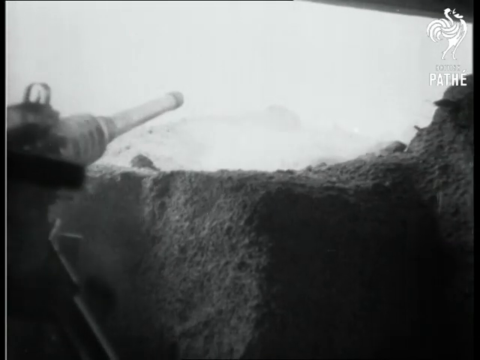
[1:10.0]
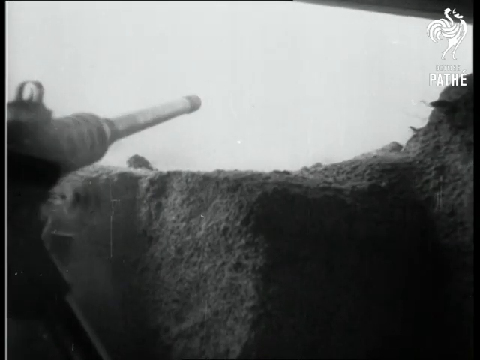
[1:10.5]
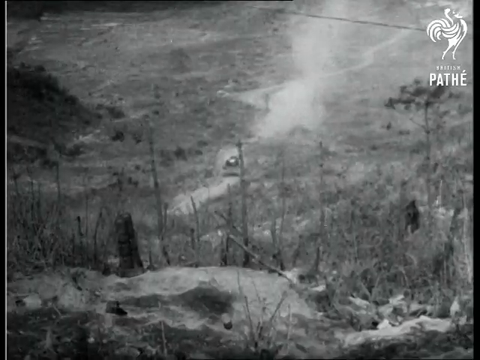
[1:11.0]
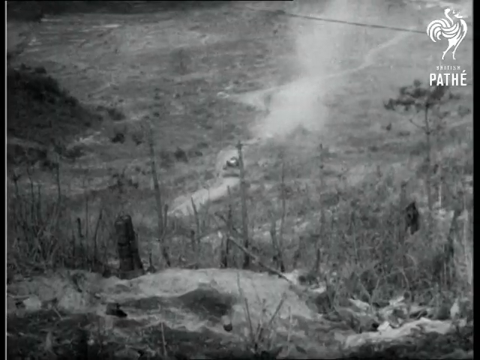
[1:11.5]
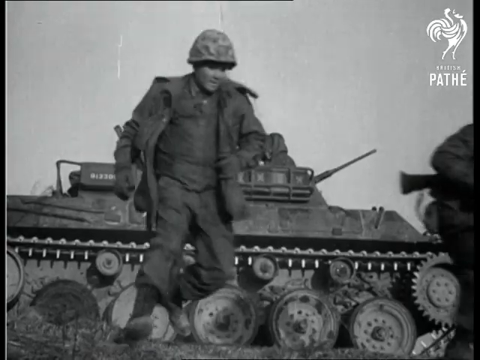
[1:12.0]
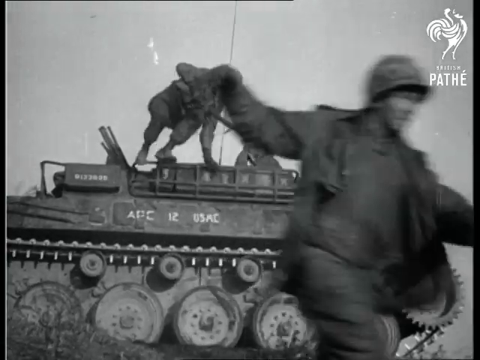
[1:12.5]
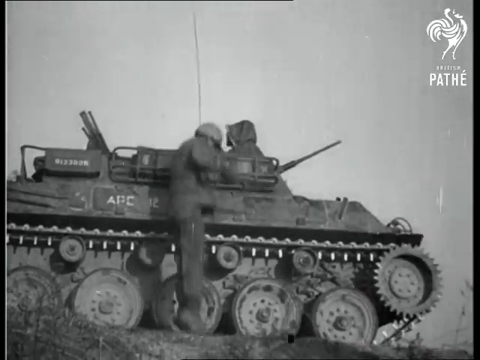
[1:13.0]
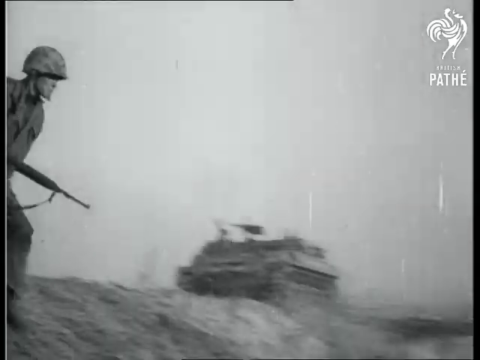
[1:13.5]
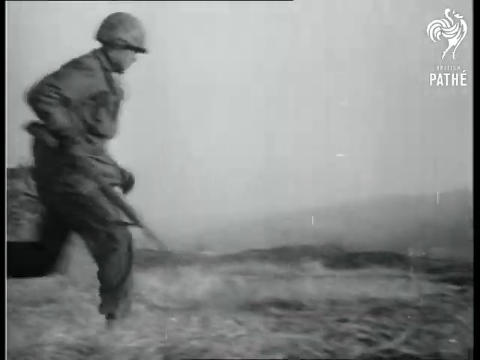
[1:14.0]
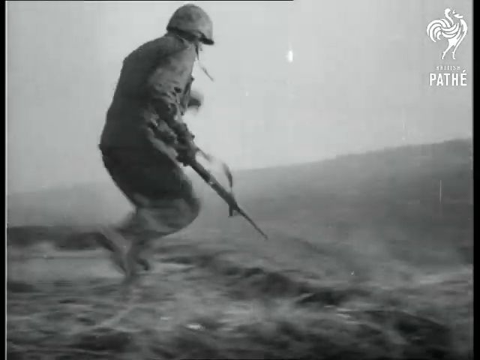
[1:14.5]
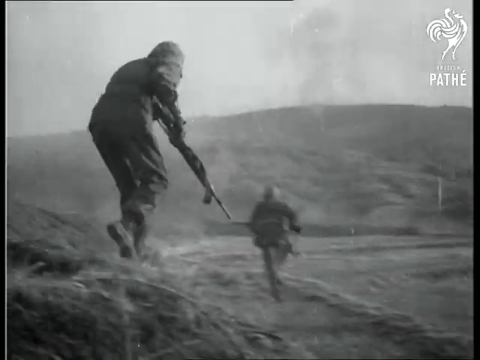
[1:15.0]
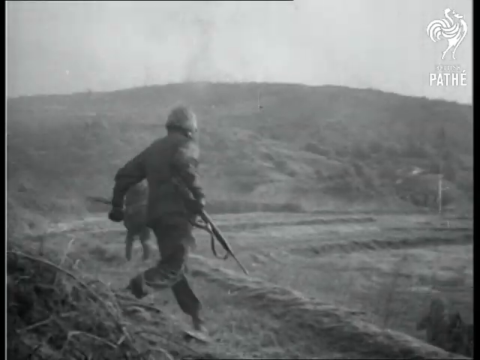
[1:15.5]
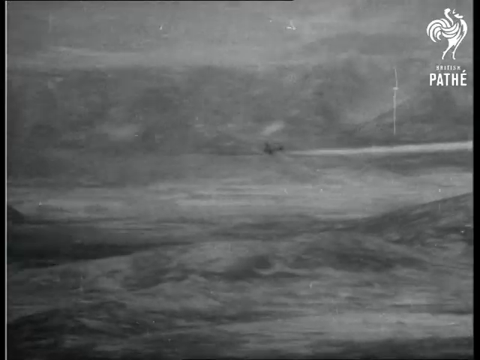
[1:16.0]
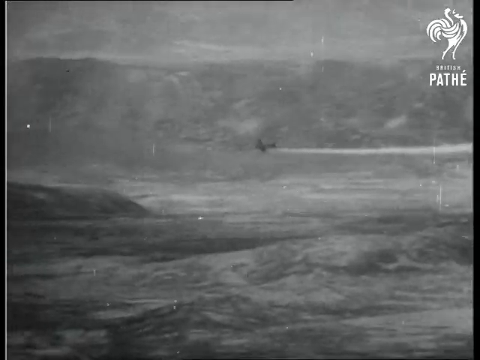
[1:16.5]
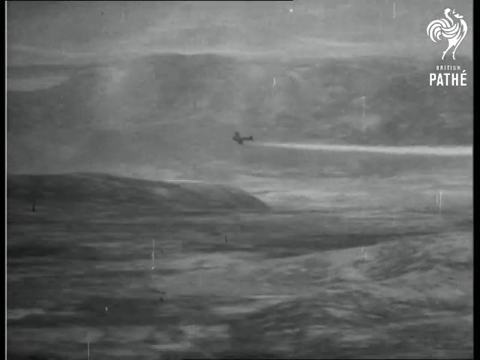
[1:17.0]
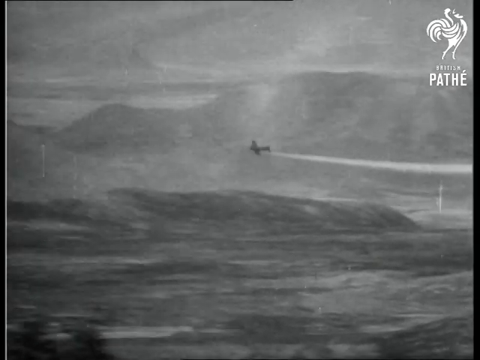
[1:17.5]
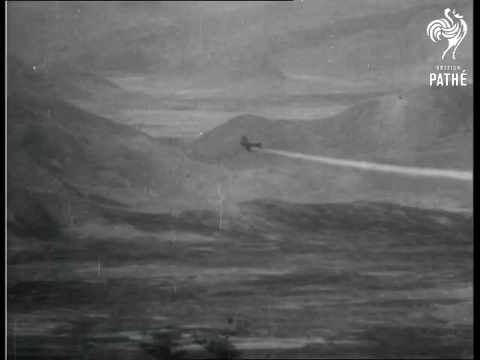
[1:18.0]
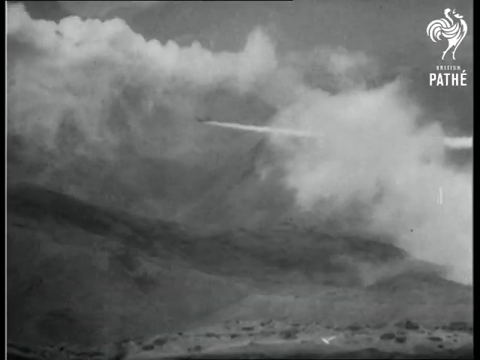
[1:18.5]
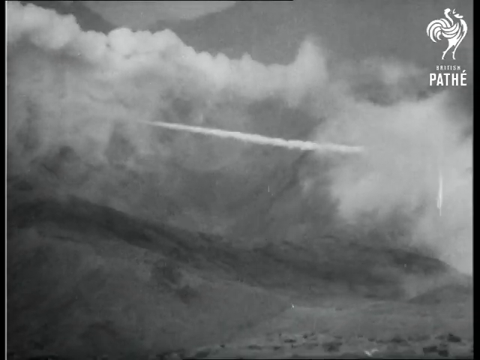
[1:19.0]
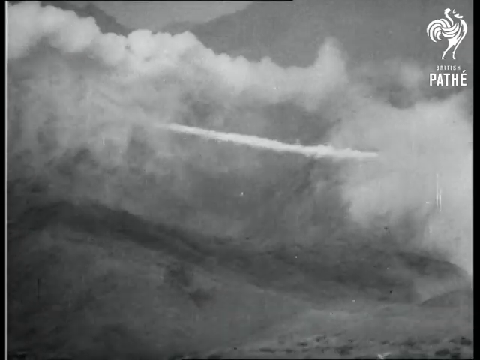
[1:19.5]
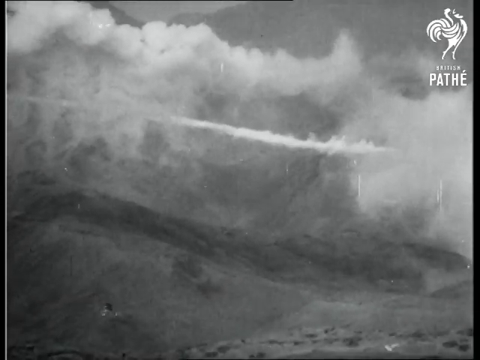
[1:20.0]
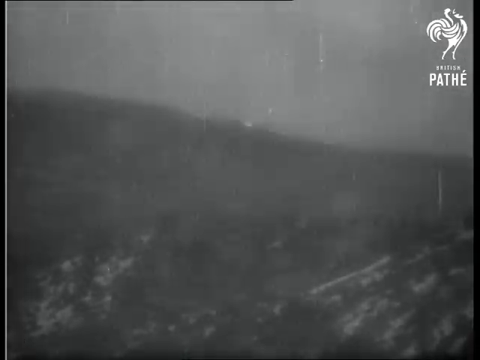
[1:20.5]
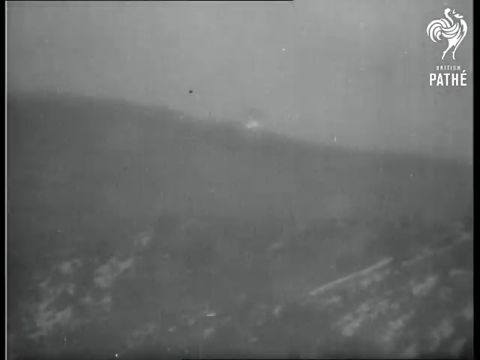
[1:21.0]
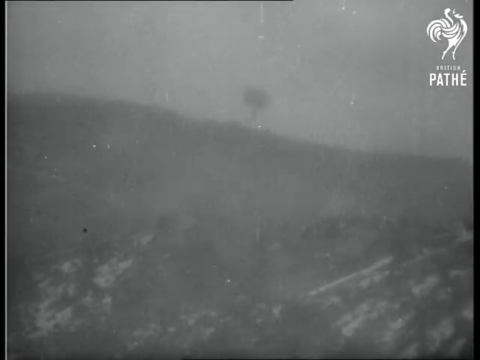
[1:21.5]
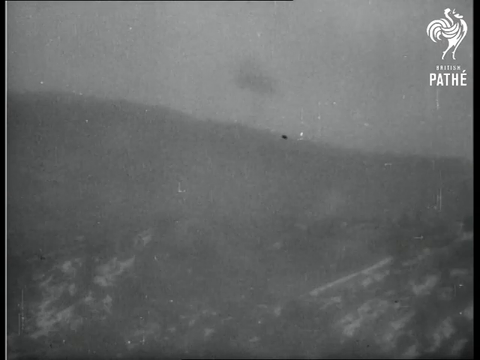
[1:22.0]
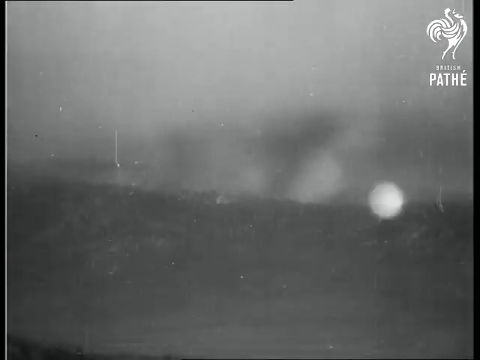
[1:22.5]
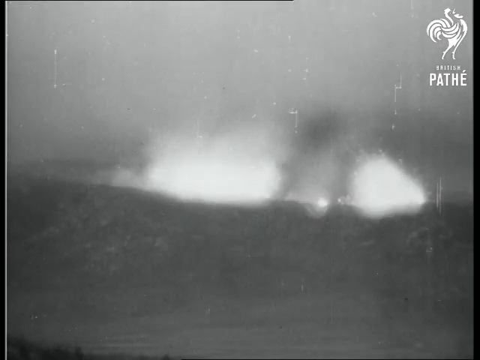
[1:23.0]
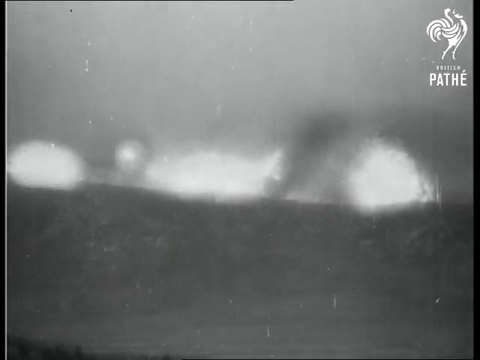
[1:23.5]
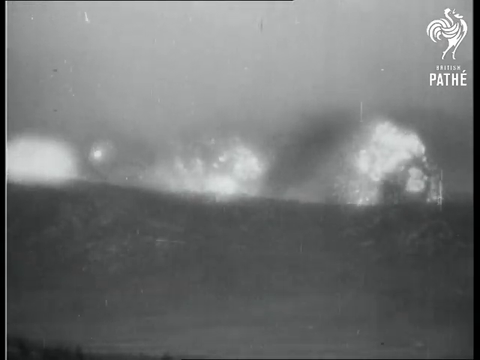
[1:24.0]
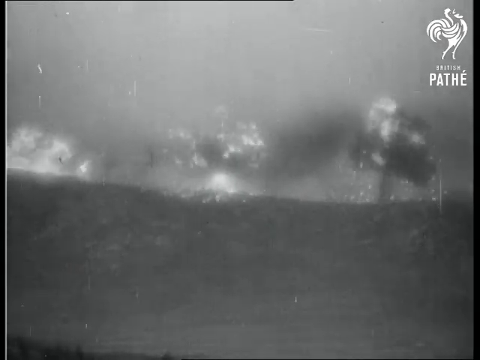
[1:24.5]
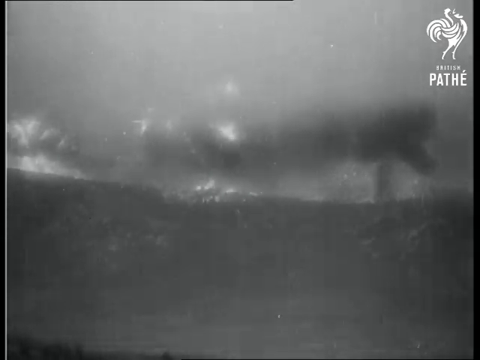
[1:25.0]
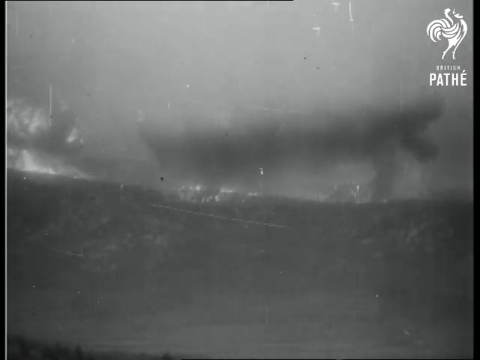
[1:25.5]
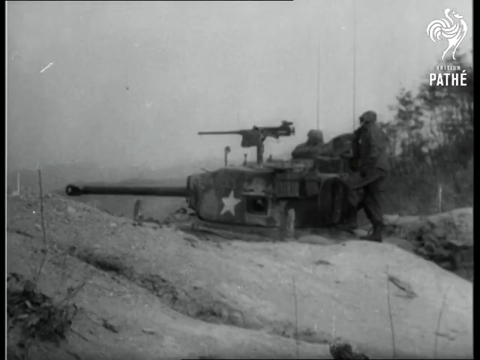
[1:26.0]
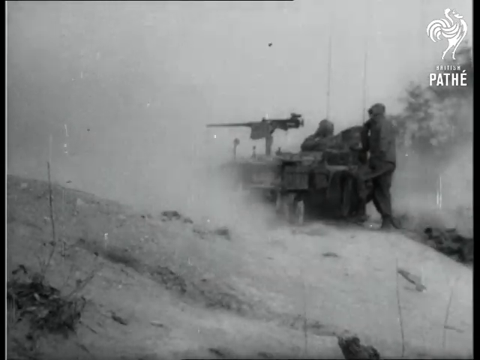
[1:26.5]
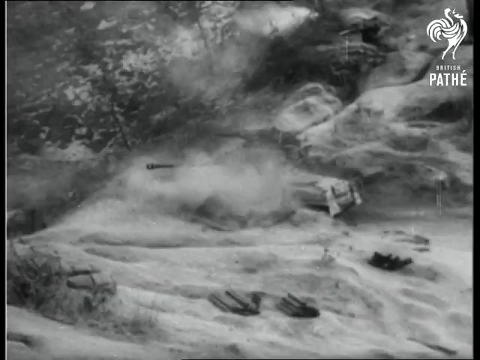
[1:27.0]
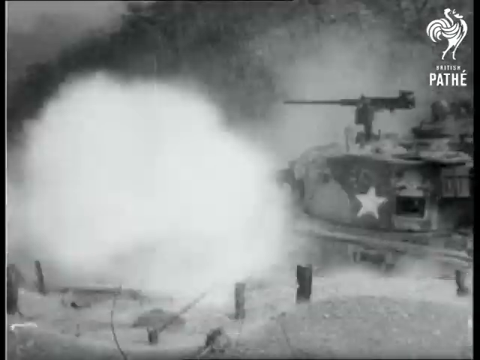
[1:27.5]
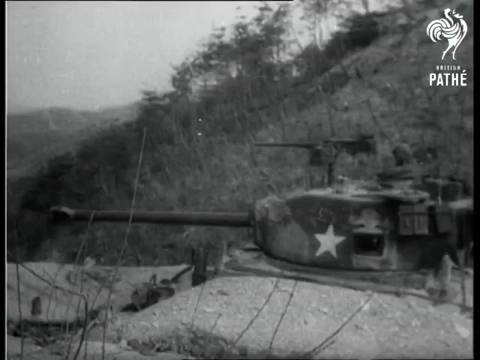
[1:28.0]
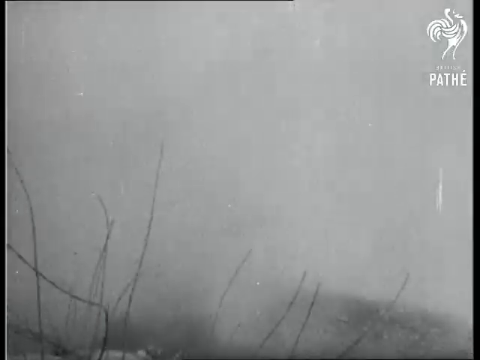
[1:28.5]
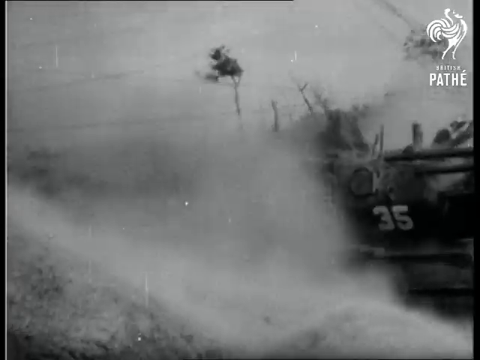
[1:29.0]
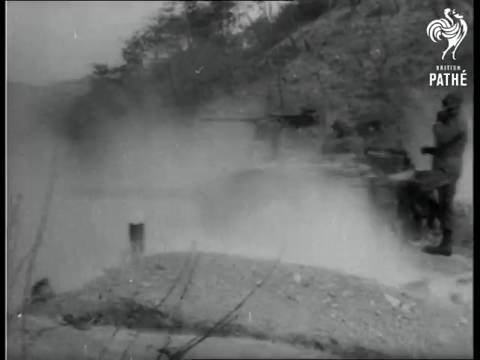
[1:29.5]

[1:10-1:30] A man fires a machine gun, and the scene cuts to a distant shot of what looks like a truck moving down a dirt road at the front lines. A closer shot reveals it is a U.S. Marine Corps tank, with several Marines jumping from its turret. The Marines, wearing helmets and full combat fatigues, run across the ground holding their automatic weapons in their right hands. The shot changes to a disabled plane moving right to left across a stormy sky, with white smoke pouring from an engine on the right. After several shots of the plane comes the point of the crash: a small mushroom cloud on a distant hill, black against a white, smoke-filled sky. Several bright explosions follow in the medium distance, and various shots show American tanks firing their guns.